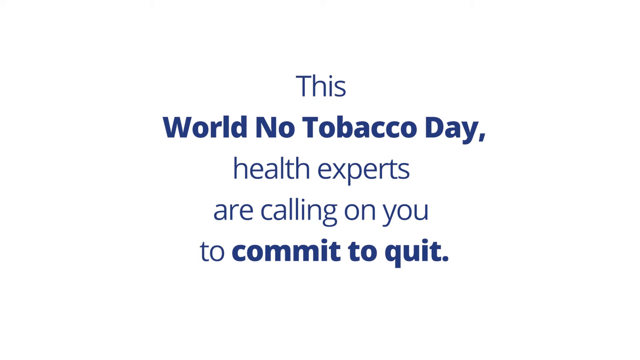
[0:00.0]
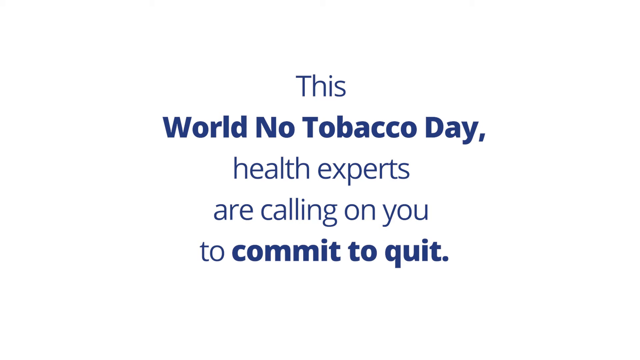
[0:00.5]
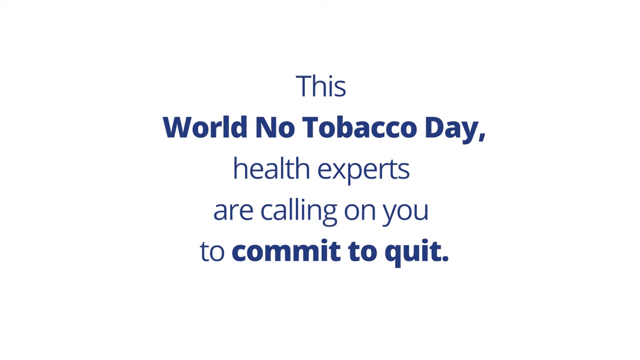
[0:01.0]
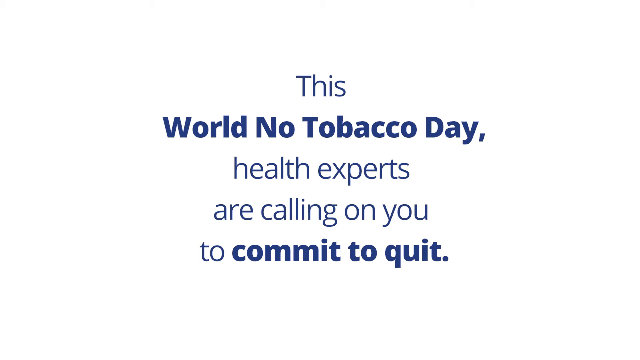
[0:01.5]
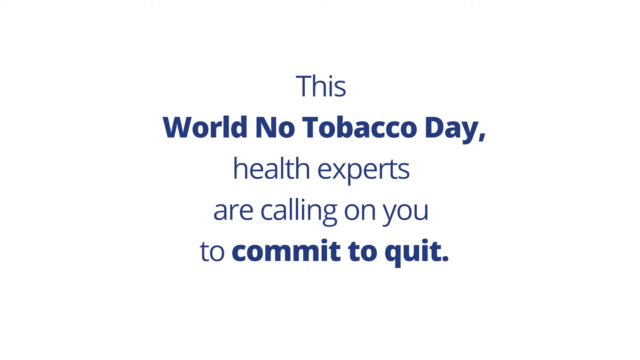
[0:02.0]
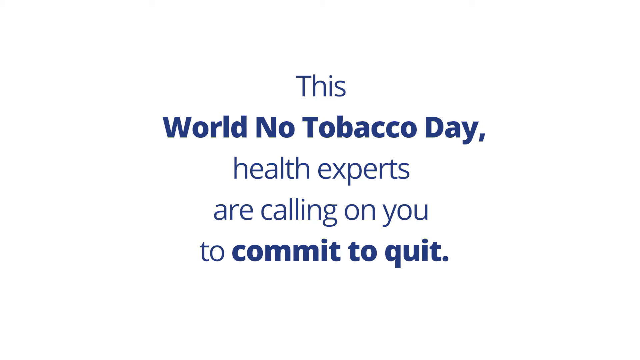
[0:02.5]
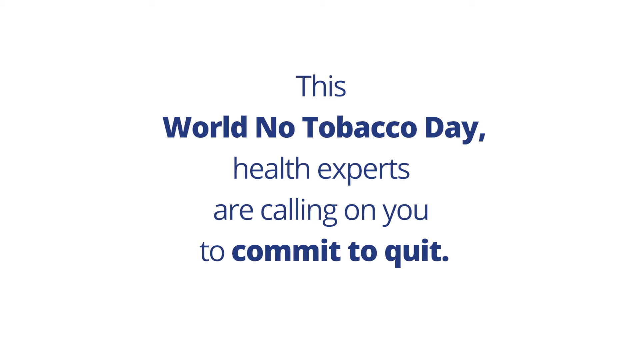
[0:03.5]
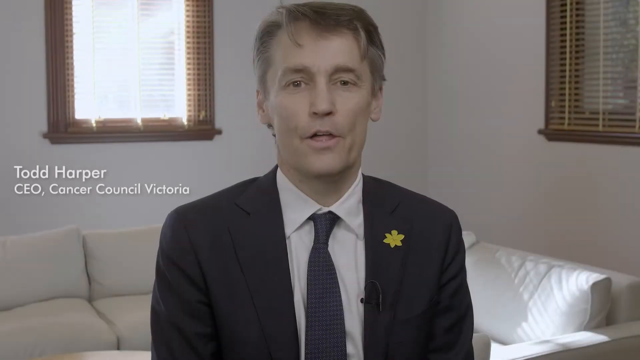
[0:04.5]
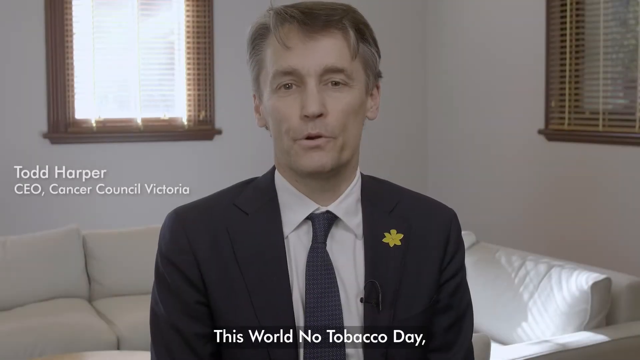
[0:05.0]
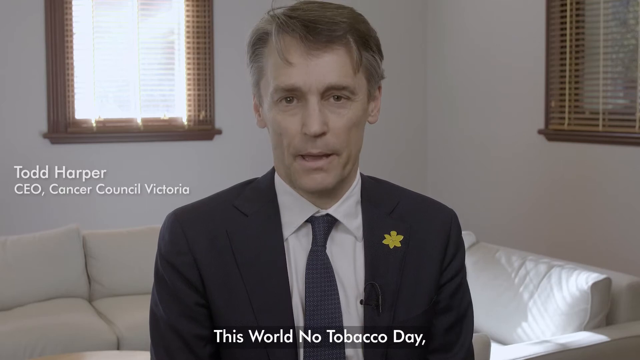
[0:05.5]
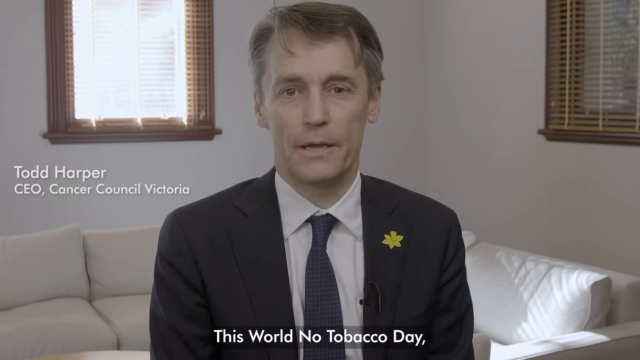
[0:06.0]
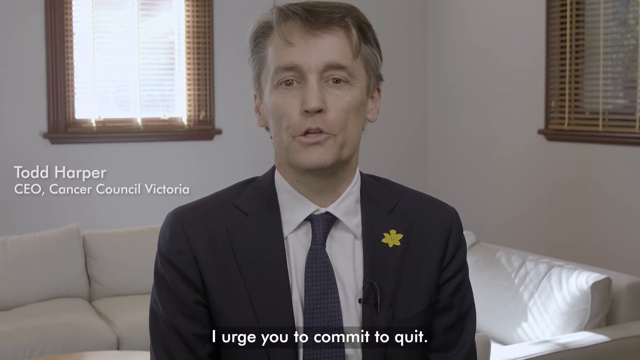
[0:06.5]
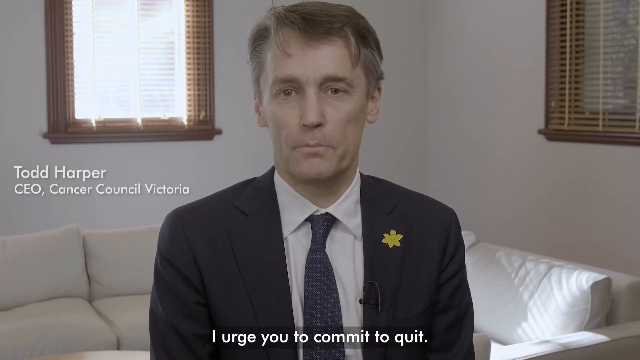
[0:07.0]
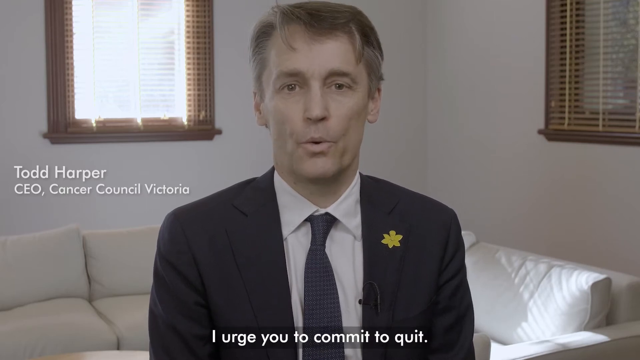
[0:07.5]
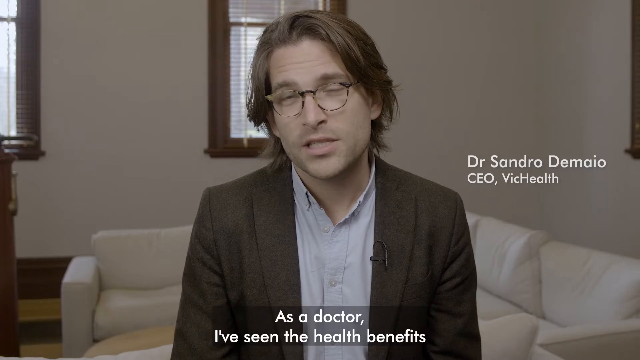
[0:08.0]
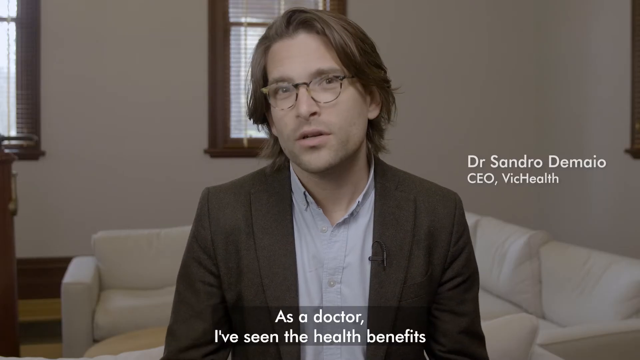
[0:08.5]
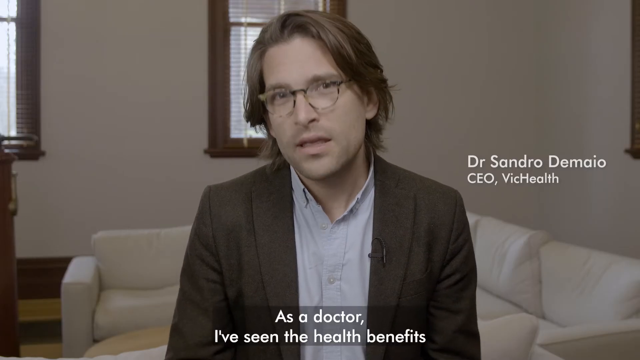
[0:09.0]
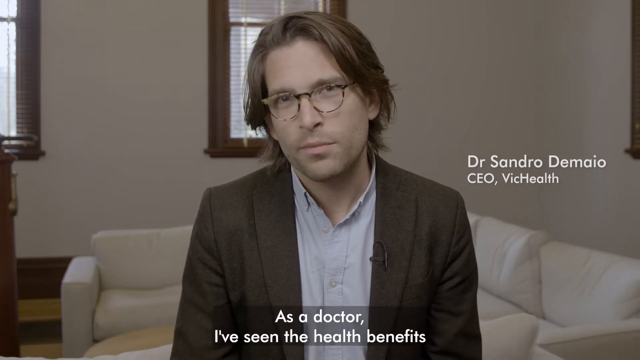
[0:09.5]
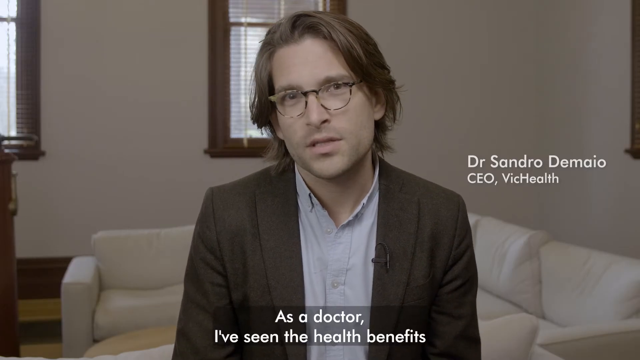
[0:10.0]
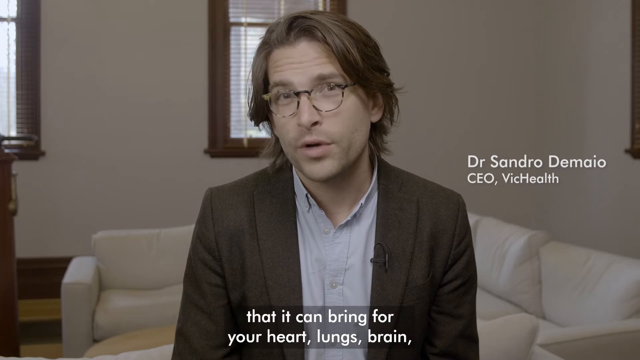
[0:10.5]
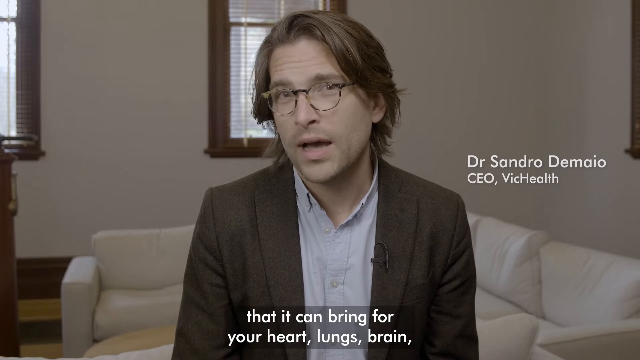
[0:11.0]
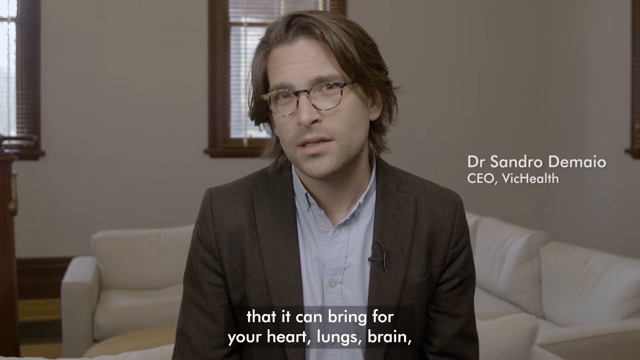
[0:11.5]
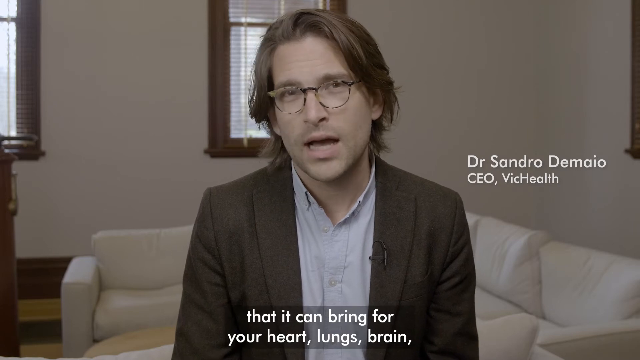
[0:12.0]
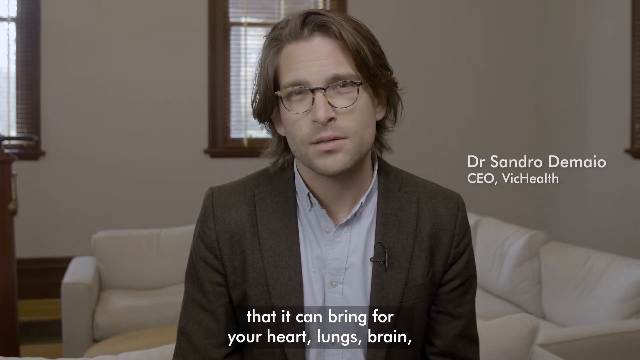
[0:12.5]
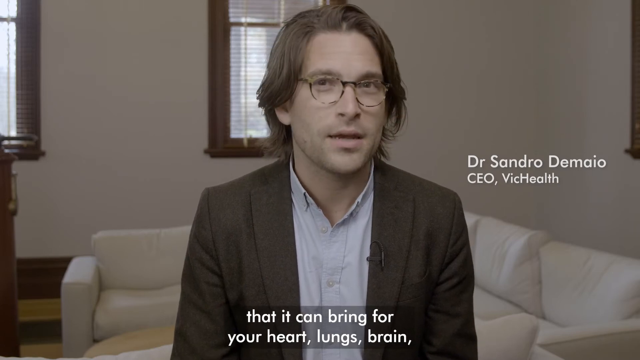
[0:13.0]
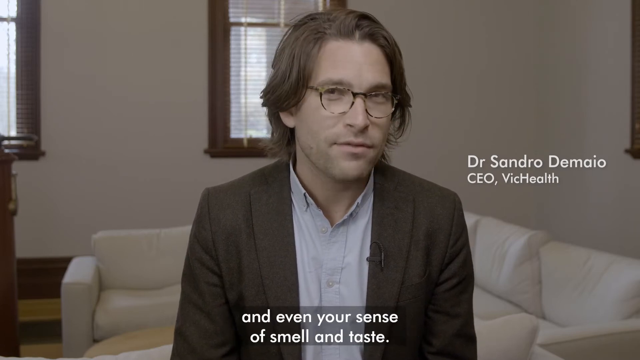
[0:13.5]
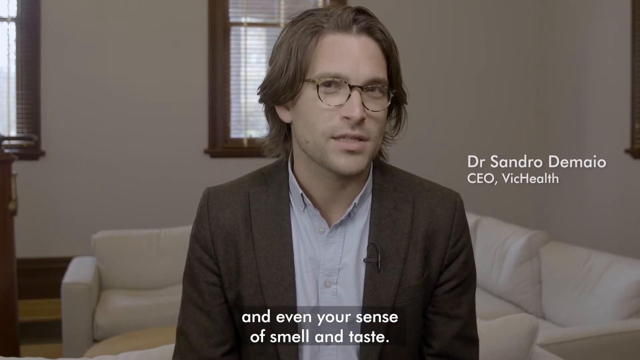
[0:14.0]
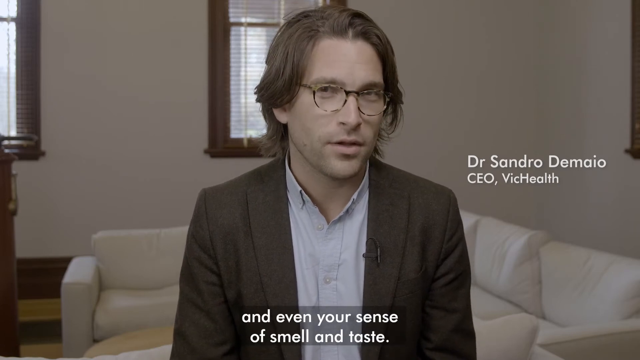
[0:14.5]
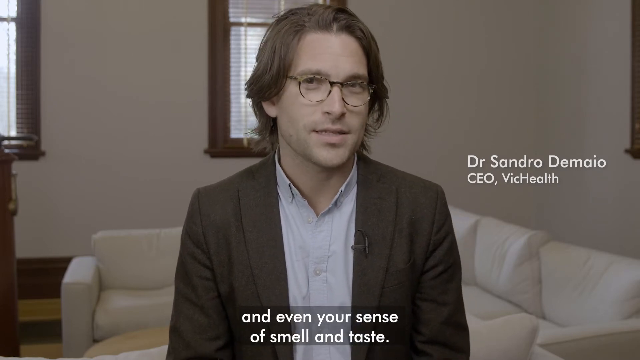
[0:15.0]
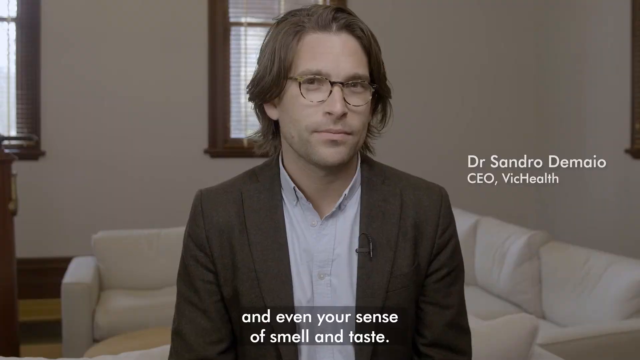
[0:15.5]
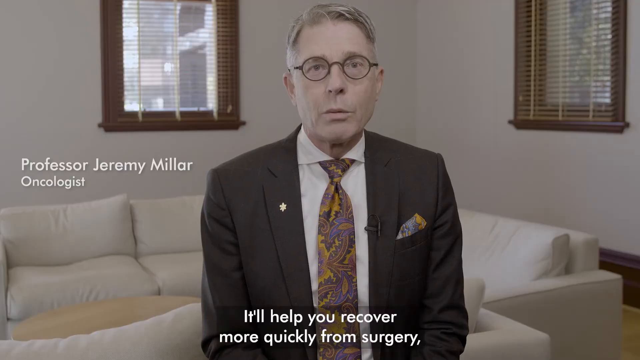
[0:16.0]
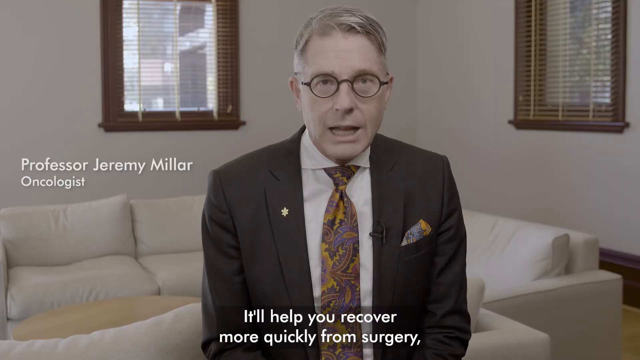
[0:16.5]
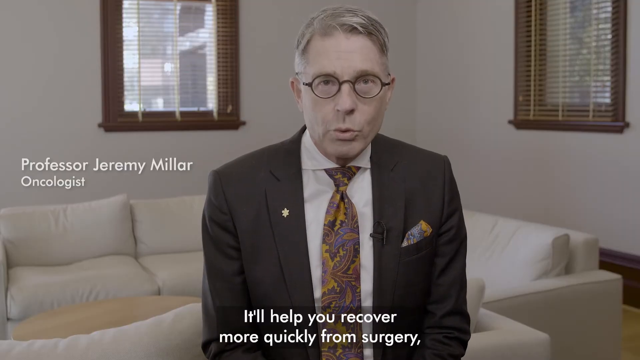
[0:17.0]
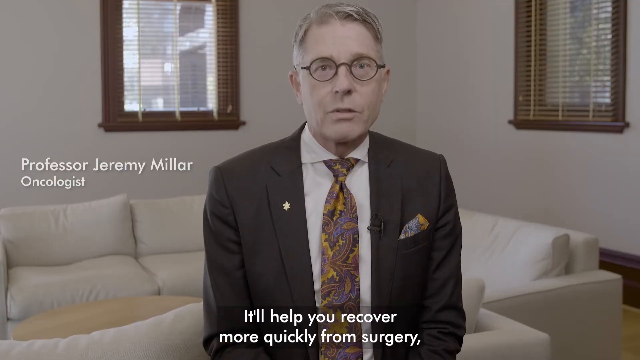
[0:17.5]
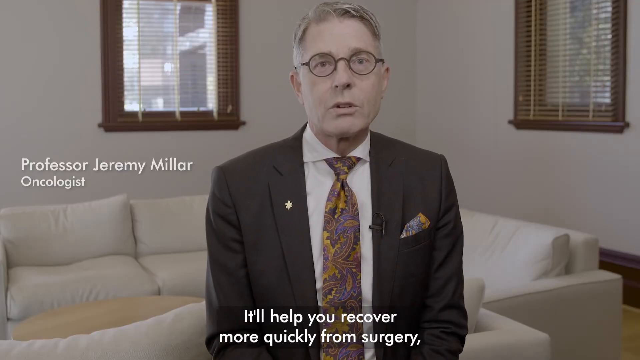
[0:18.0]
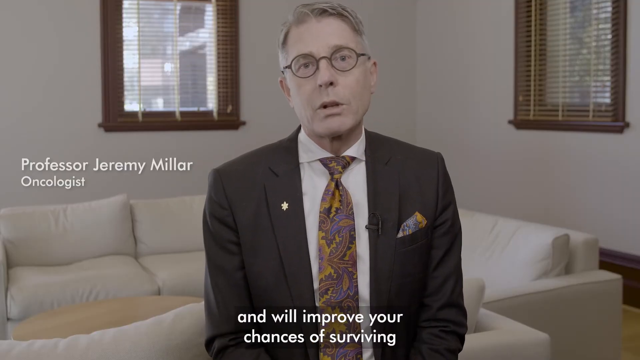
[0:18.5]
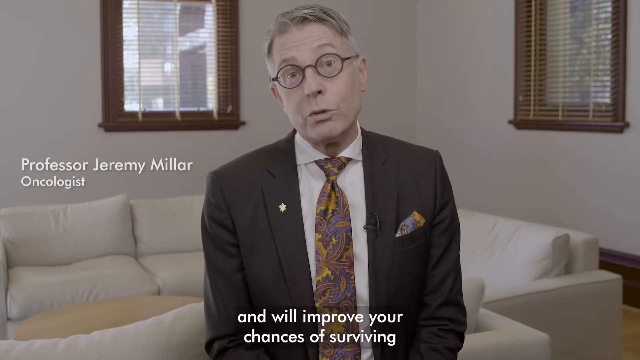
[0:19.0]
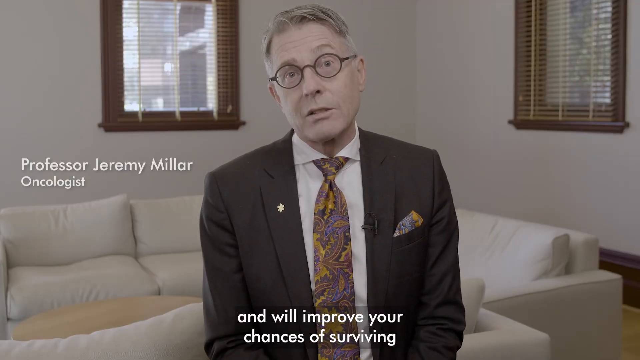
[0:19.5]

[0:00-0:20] On a white background, blue text in the middle reads "This World No Tobacco Day, Health Experts Are Calling On You To Commit To Quit." The video fades to black, then fades back in on a man sitting in a very comfortable-looking room. White text on the left reads "Todd Harper" and beneath it "CEO, Cancer Council Victoria." He wears a collared white shirt, a blue tie and suit, and a yellow lapel. Captions at the bottom read "This World No Tobacco Day, I urge you to commit to quit." The video switches to another man in a comfortable-looking room, wearing a brown blazer, glasses and a collared blue shirt. White text to the right reads "Dr Sandro Demaio" and beneath it "CEO, VicHealth." His captions read "As a doctor I've seen health benefits that it can bring for your heart, lungs, brain and even your sense of smell and taste." Next comes a third man with grey hair, wearing glasses, a dark suit and a multicolored tie. White text to the left reads "Professor Jeremy Millar" and beneath it "Oncologist." Captions at the bottom read "It'll help you recover more quickly from surgery and improve your chances of surviving."